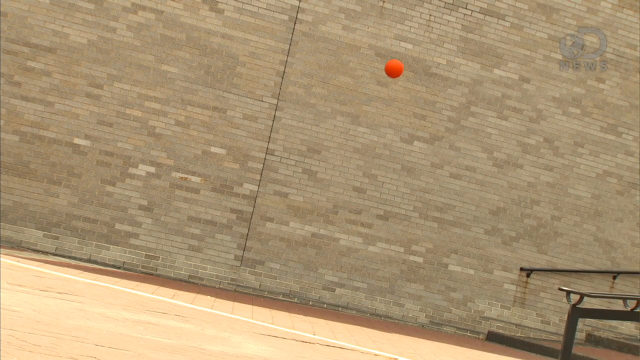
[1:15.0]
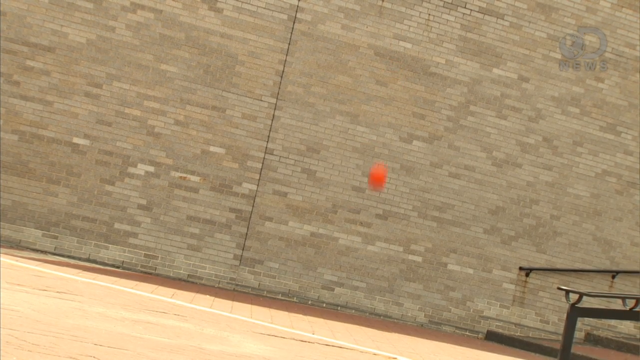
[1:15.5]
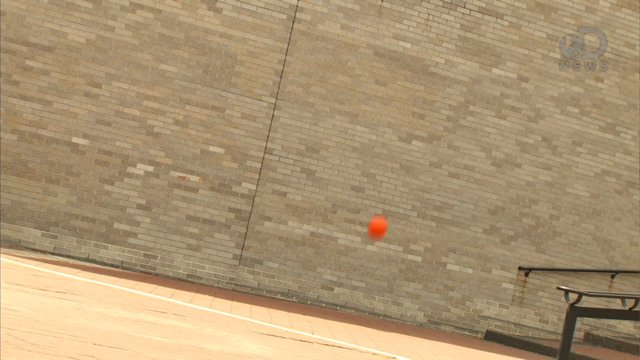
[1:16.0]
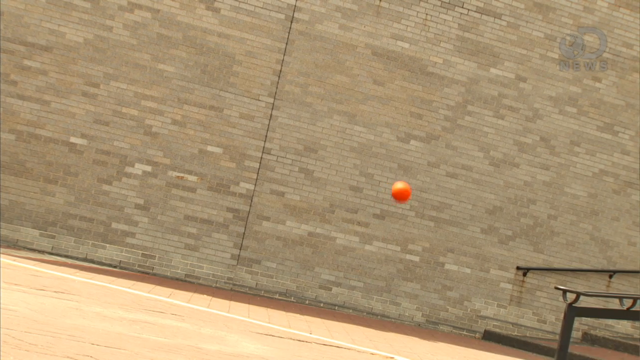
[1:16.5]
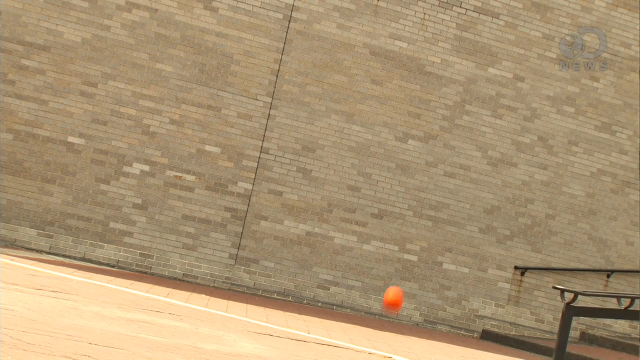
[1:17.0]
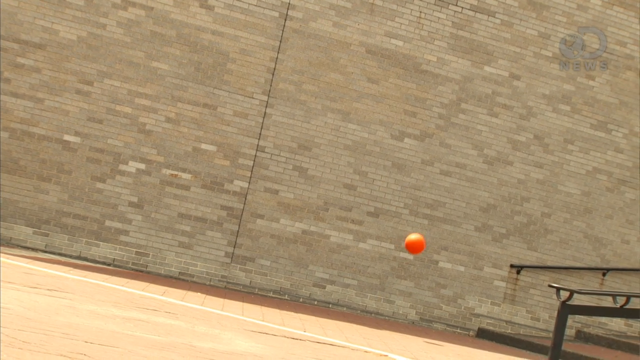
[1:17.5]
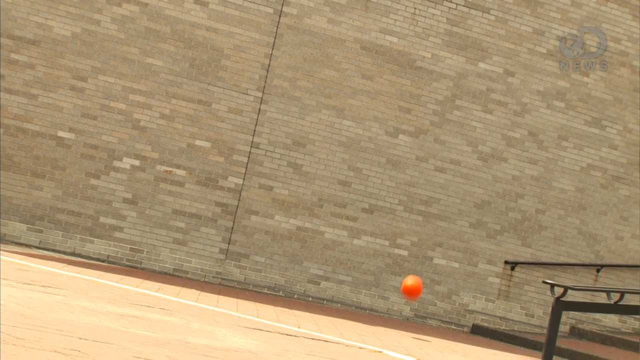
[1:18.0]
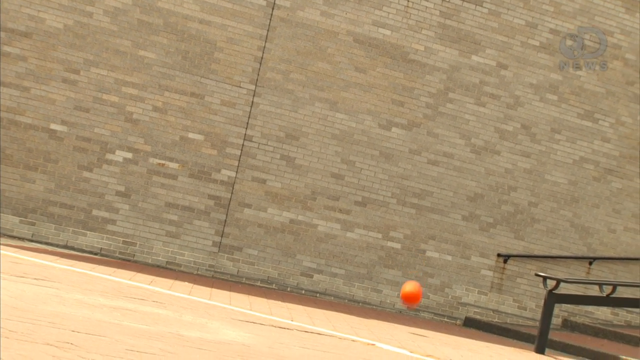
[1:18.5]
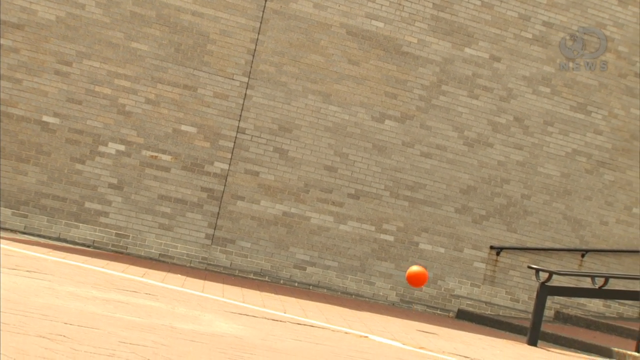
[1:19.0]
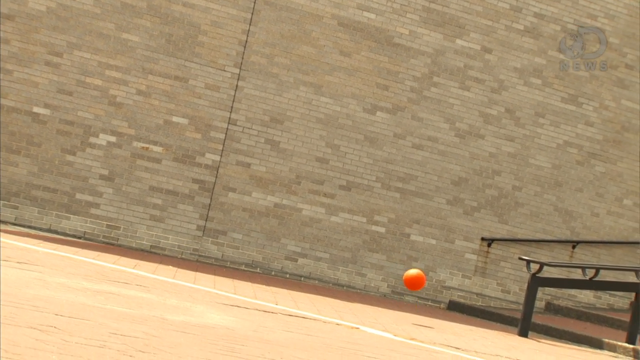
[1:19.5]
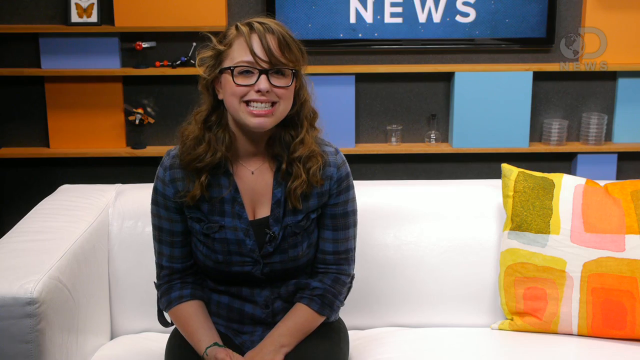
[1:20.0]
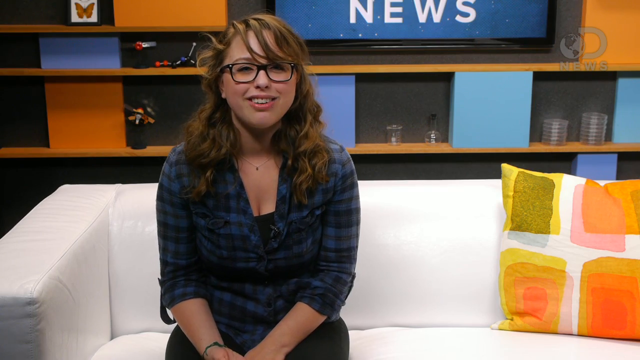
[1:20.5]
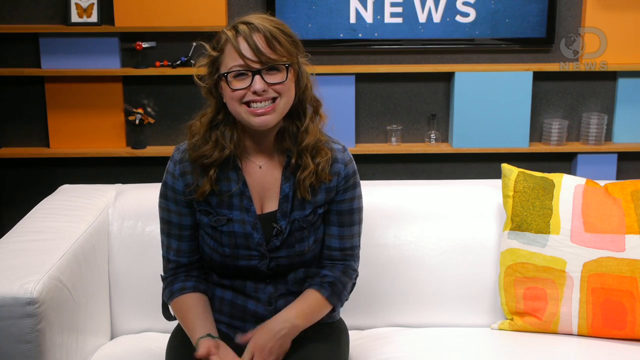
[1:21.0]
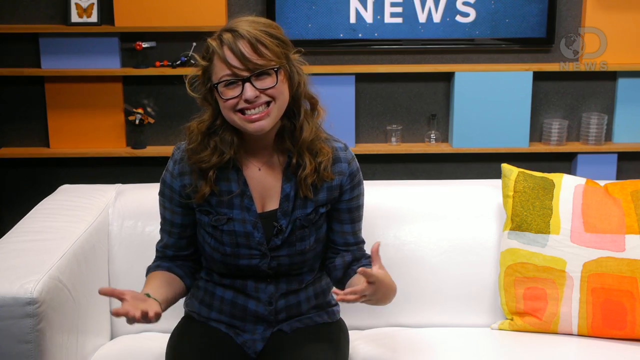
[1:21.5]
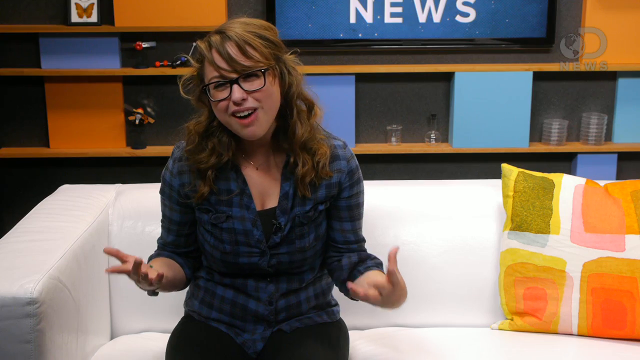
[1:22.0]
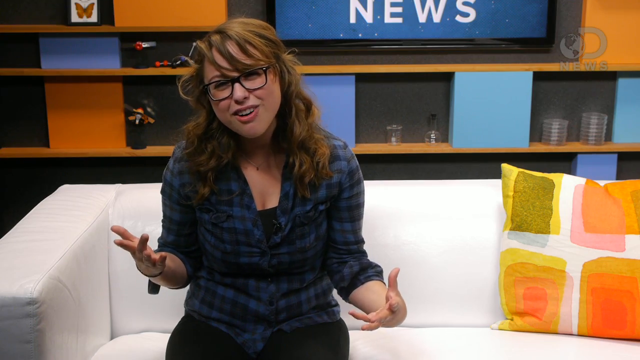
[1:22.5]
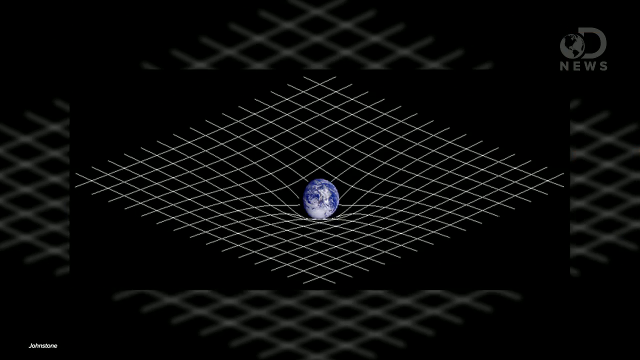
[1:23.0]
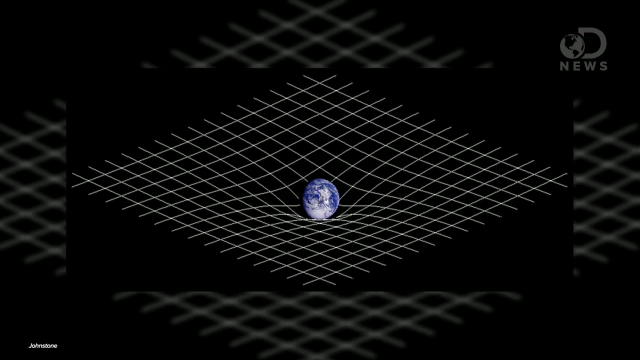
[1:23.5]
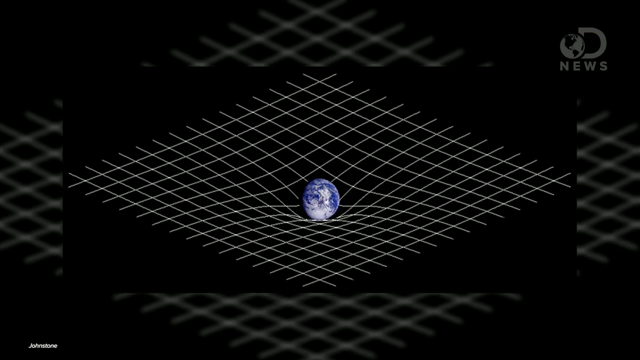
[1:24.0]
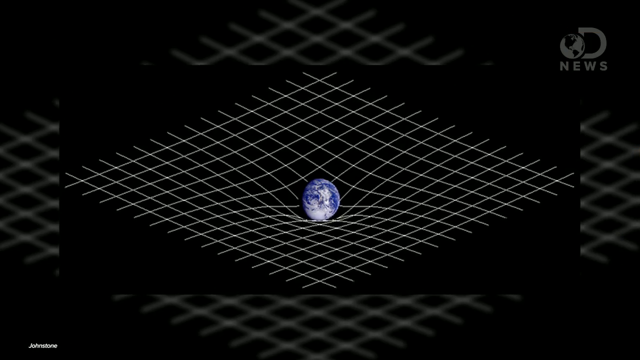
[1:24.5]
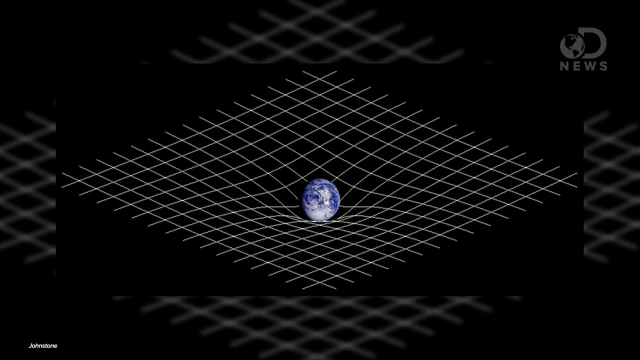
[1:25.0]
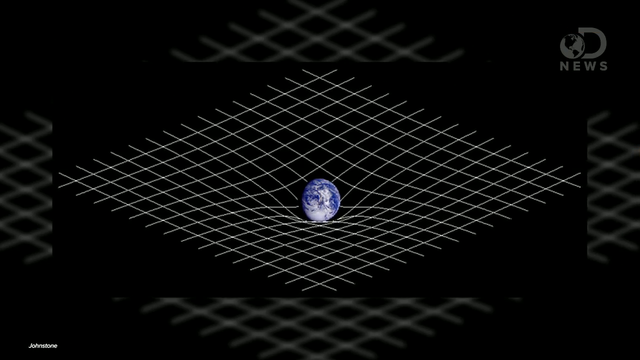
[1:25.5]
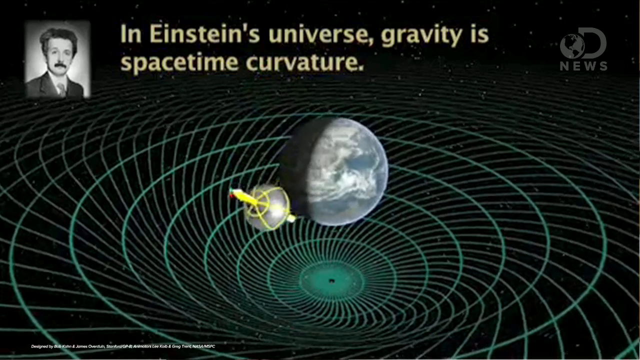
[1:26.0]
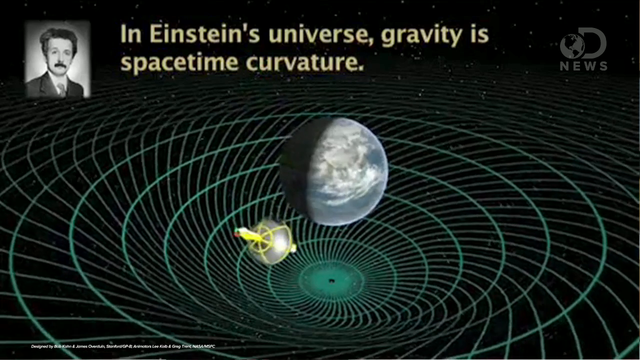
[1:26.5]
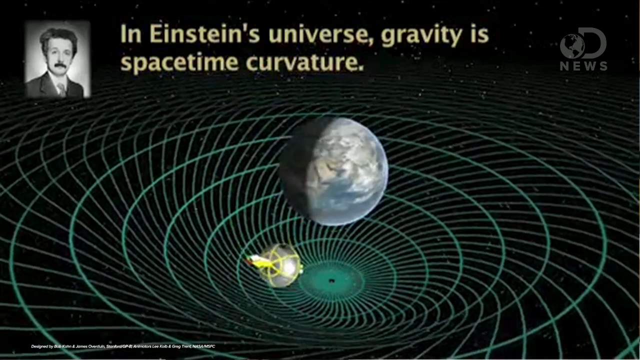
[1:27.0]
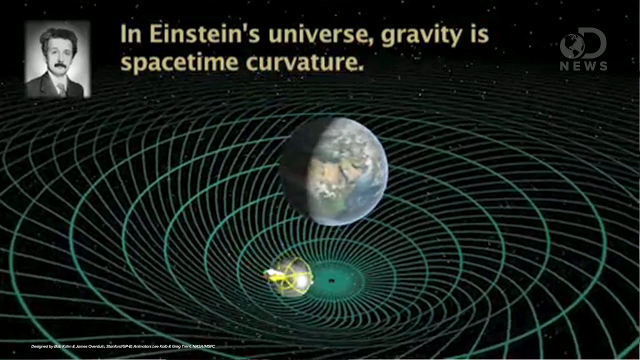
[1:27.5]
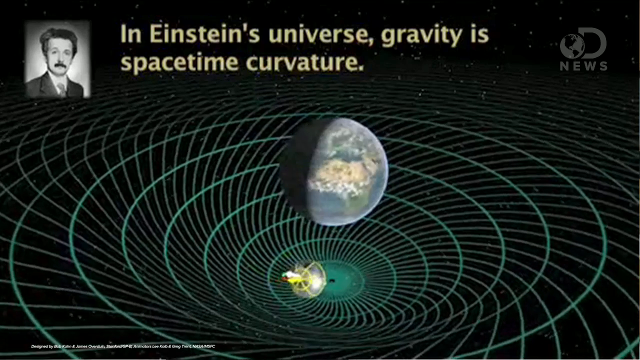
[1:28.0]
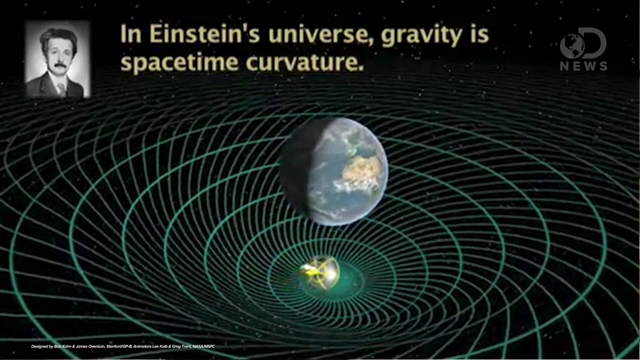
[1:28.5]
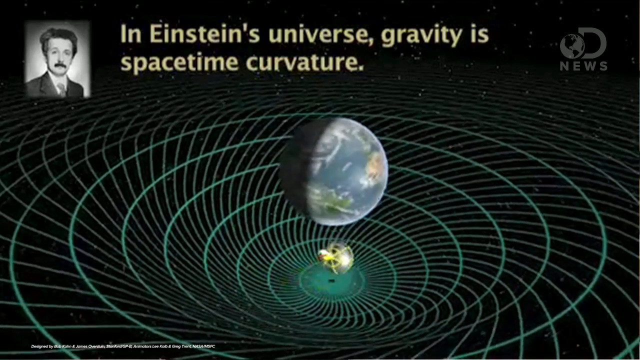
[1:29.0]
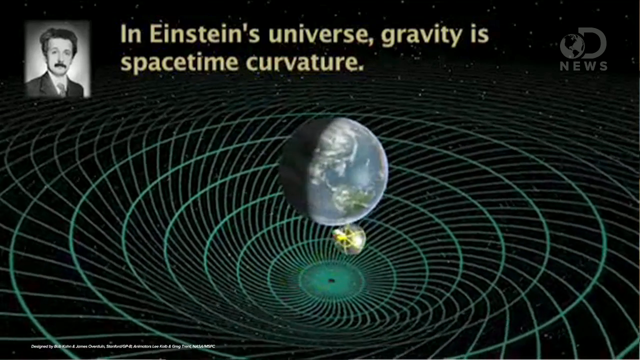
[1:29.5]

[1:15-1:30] A thrown basketball hits a gray wall and bounces, and a shadow of the ball is visible on the ground; the setting looks like it could be a gym. The video shows gravity and curvature of the universe, and Einstein's name is brought up. A checkerboard grid pattern has an earth kind of resting in it, almost like a spider's web holding the earth up, with the grid sinking in a little. A spinning earth appears with a tiny, kind of yellowish and white object like a satellite going kind of around and under it. Below the earth is a drawn concentric circle pattern in a kind of teal color: against a dark background, brighter teal small circles extend out to larger circles, with lines through them.